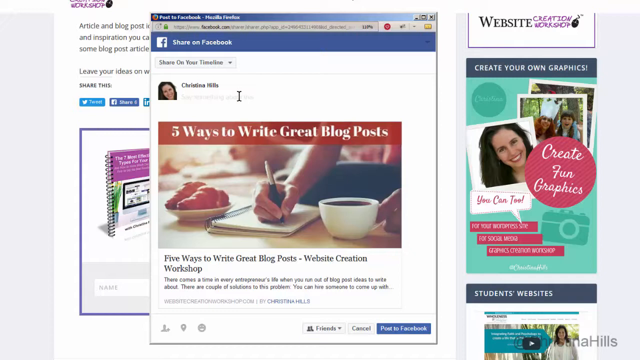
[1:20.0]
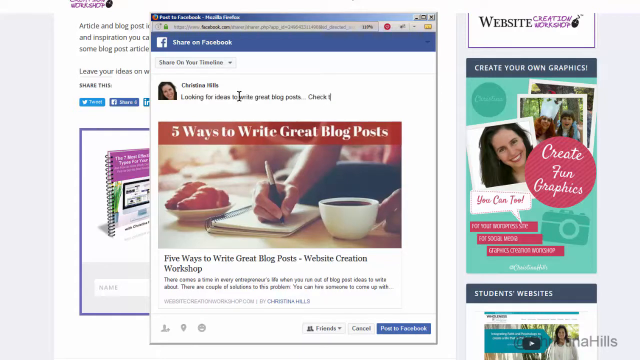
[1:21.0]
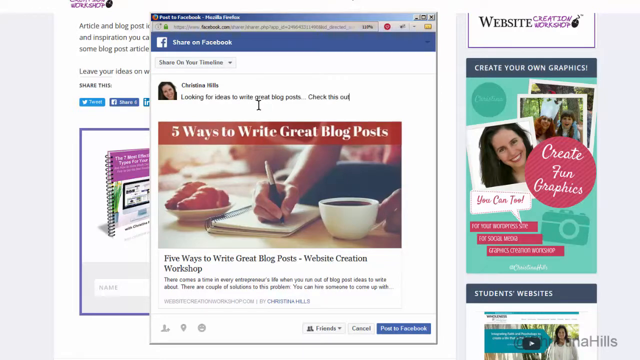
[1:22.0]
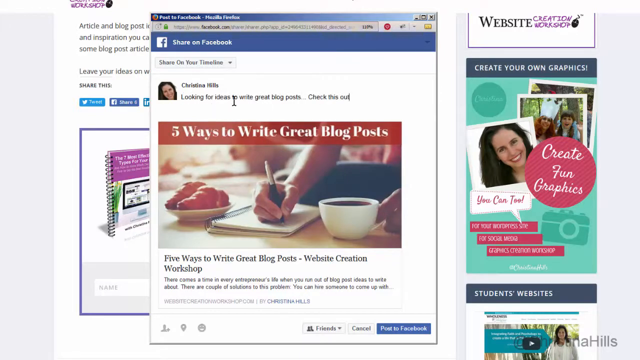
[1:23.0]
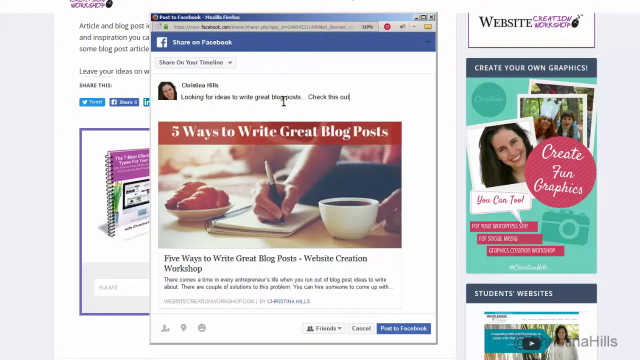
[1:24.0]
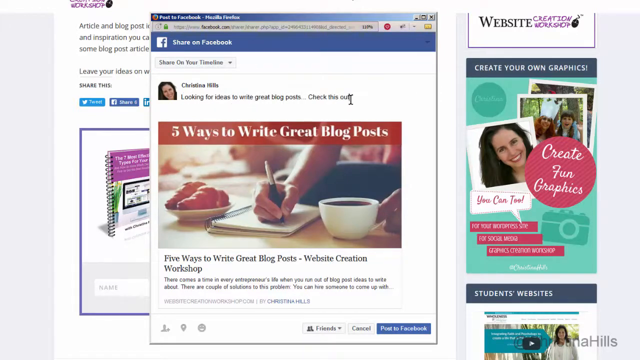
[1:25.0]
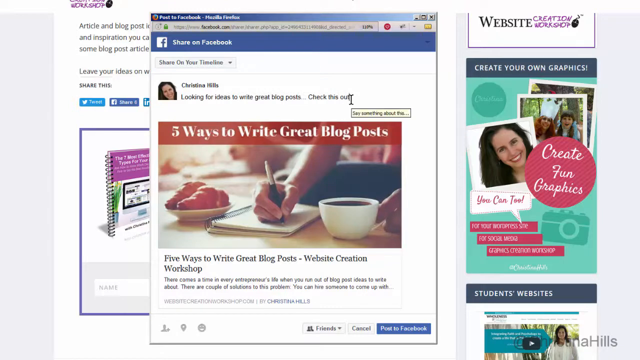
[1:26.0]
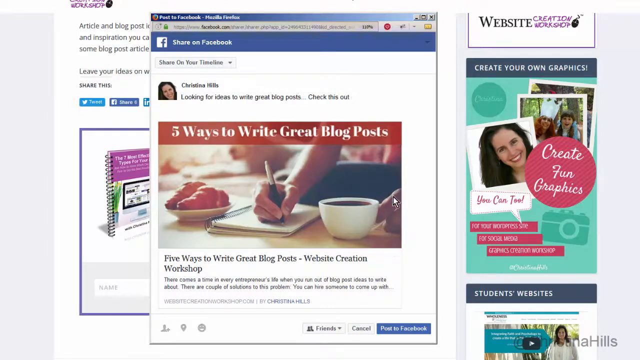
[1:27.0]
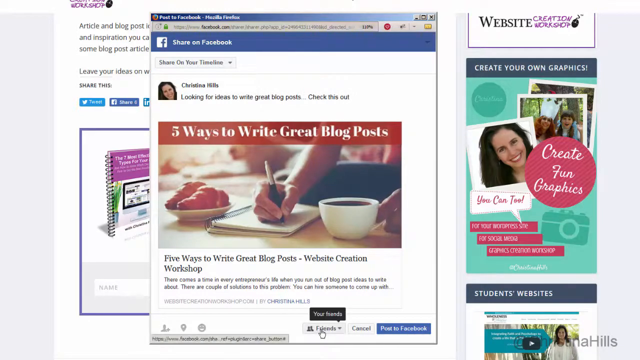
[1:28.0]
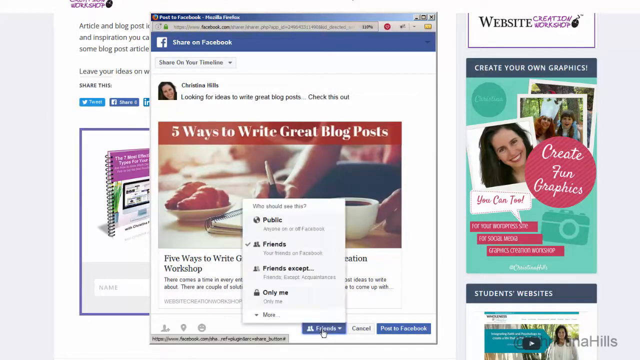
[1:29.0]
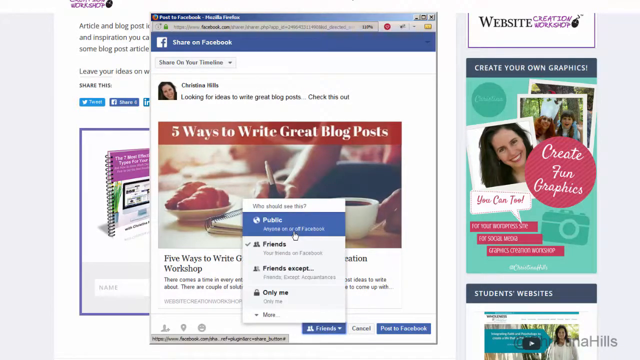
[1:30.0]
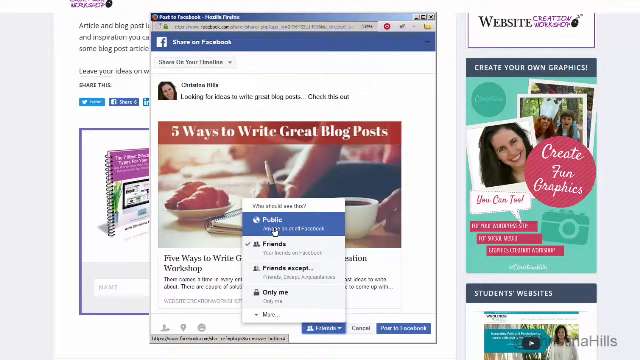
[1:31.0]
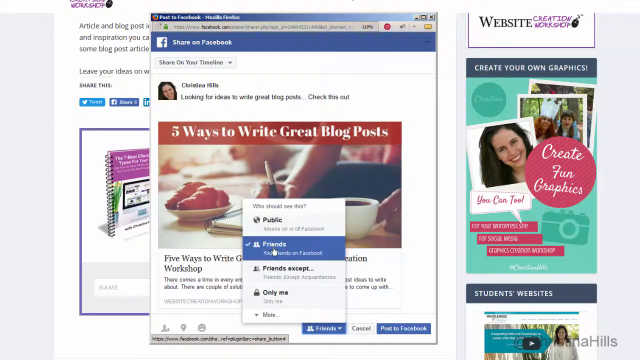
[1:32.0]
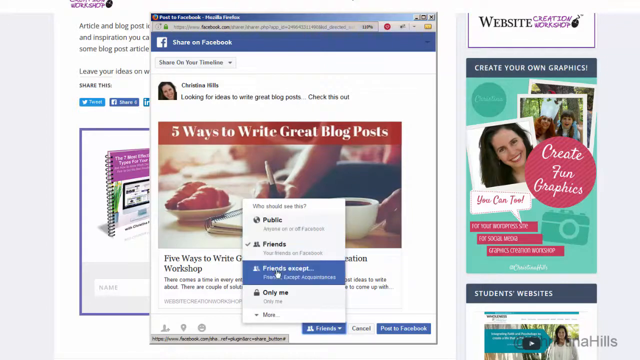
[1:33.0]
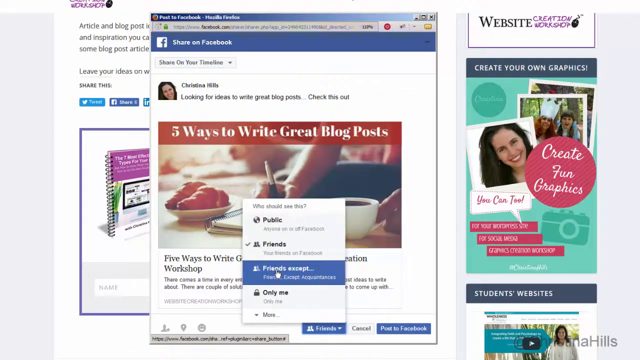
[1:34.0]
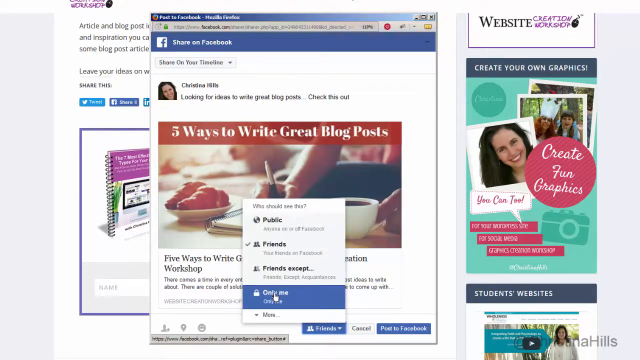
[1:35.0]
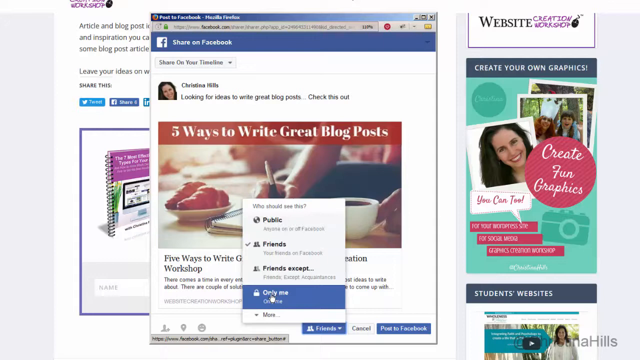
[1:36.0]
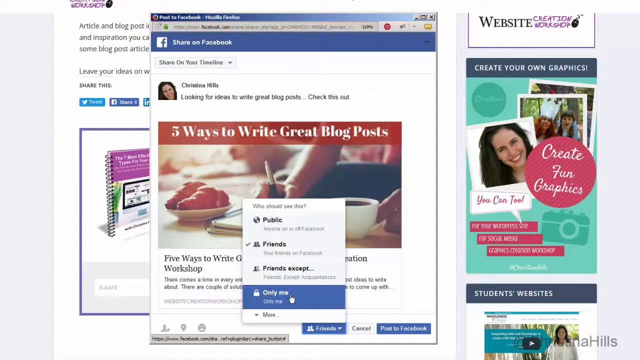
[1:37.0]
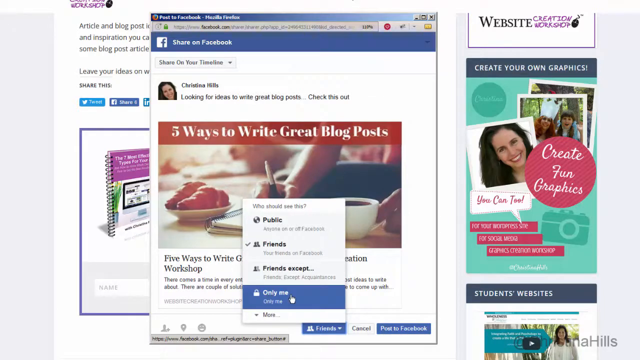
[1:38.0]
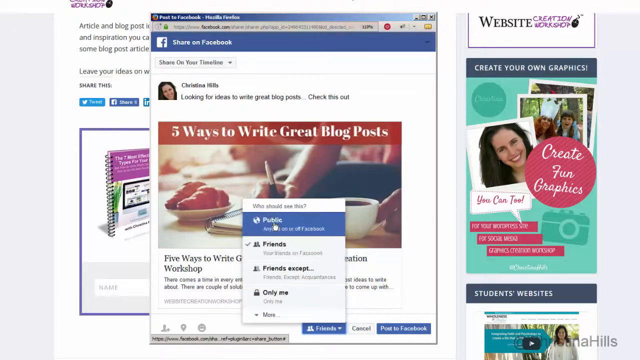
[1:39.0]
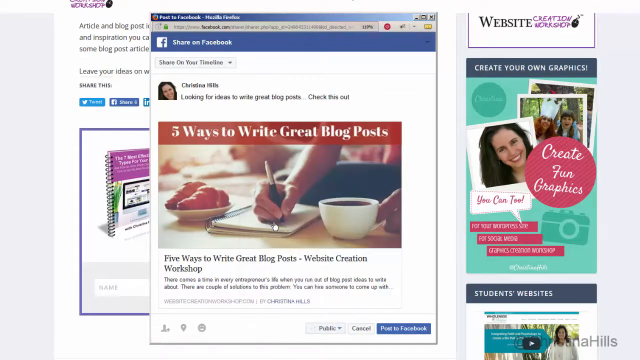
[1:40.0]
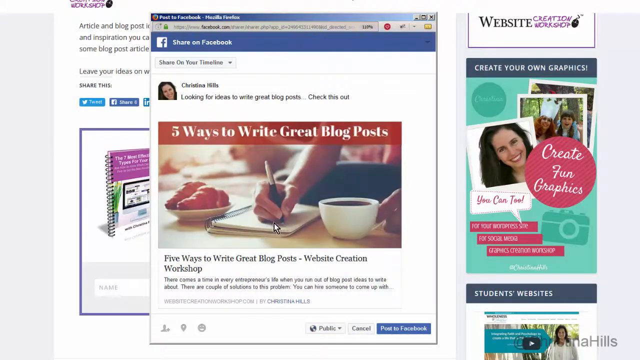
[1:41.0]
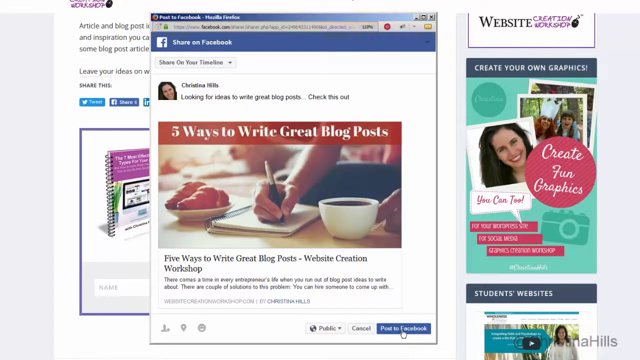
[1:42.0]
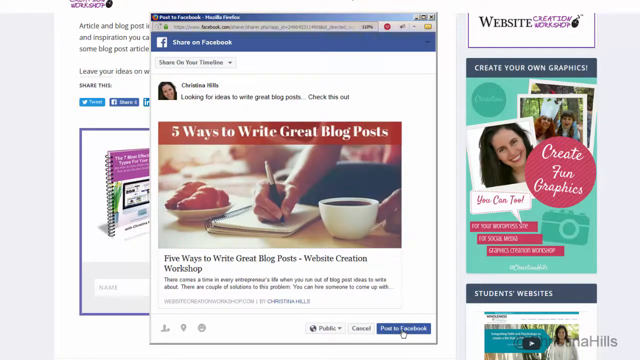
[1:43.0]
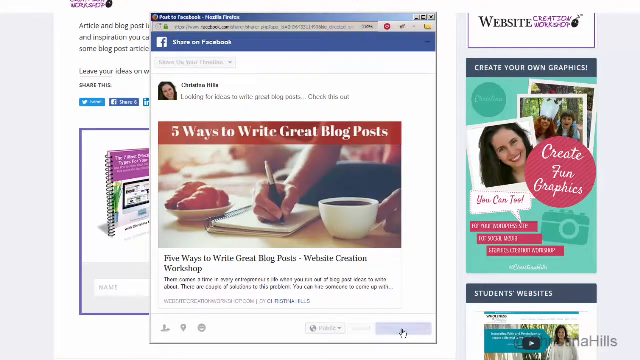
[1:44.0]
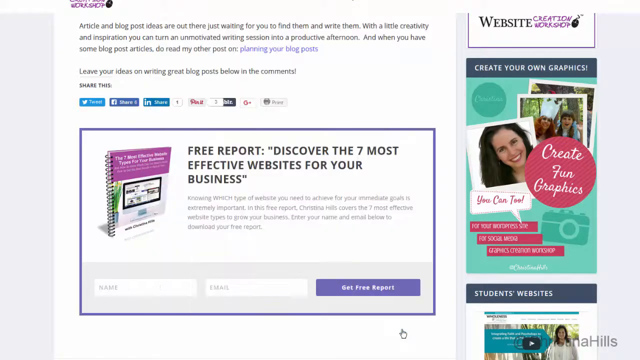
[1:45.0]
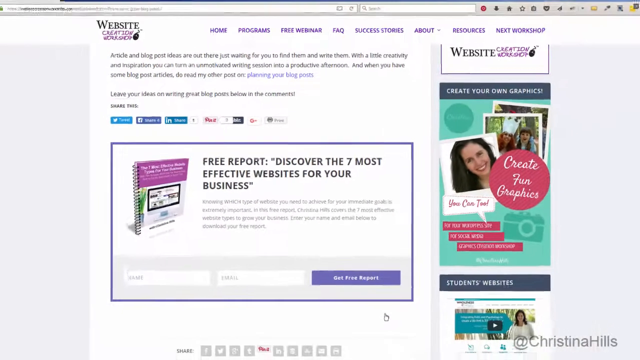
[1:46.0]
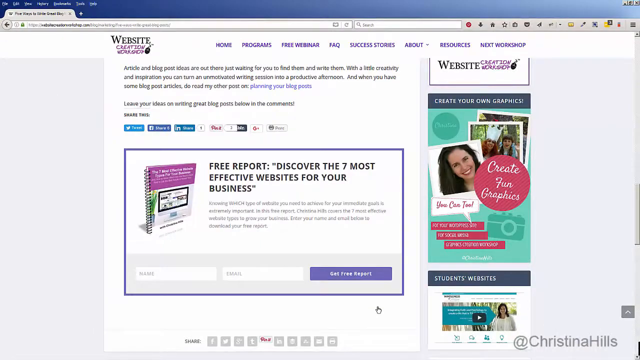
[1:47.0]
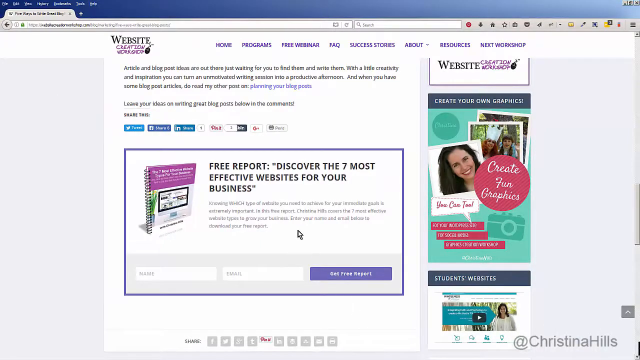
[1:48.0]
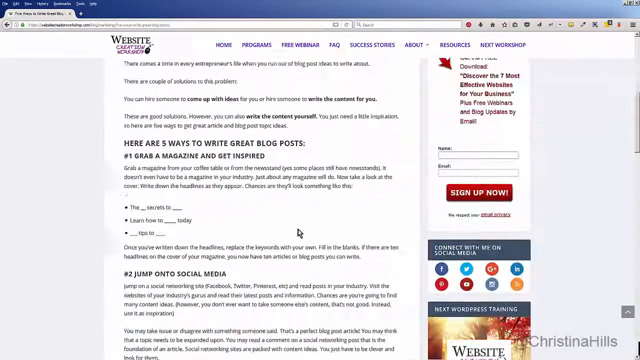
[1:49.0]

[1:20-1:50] Someone shares an article on Facebook. A computer screen shows an article open behind a Post to Facebook box. In the sharing box is a profile picture of someone named Christina Hills next to her name. Text appears underneath as if typed in, reading, "Looking for ideas to write great blog posts? Check this out." Below it is the article, entitled "5 Ways to Write Great Blog Posts," with a photograph underneath of someone's hand writing in a notebook with a pen while holding a coffee cup in their left hand; on the left side of the photo next to the notebook is a white plate filled with croissants. The cursor moves down to the bottom of the screen, where the audience for the post can be selected, and each option in the menu is briefly highlighted, including public, friends, friends except, and only me. The cursor appears to click the choice "public," the menu disappears, and then the Post to Facebook button is clicked.